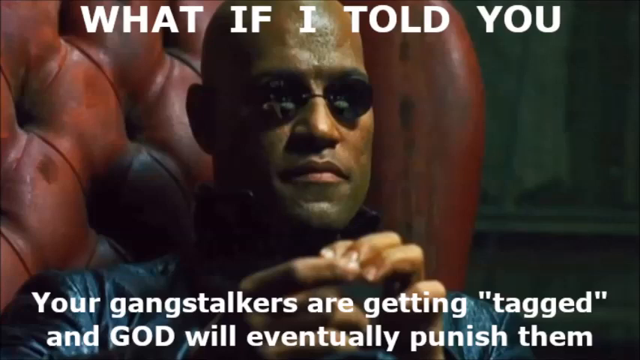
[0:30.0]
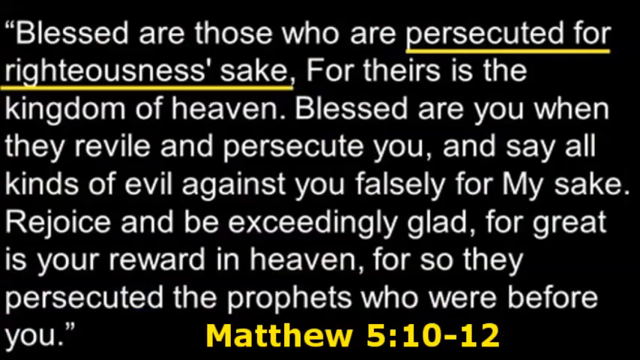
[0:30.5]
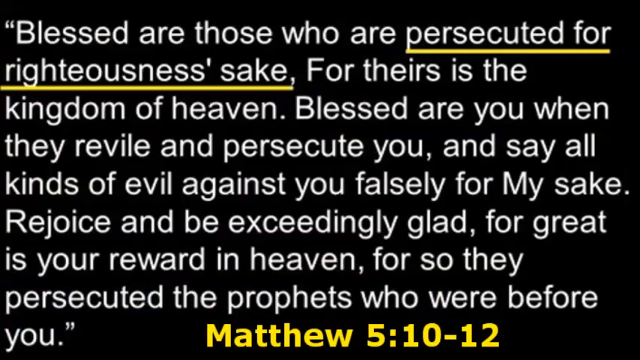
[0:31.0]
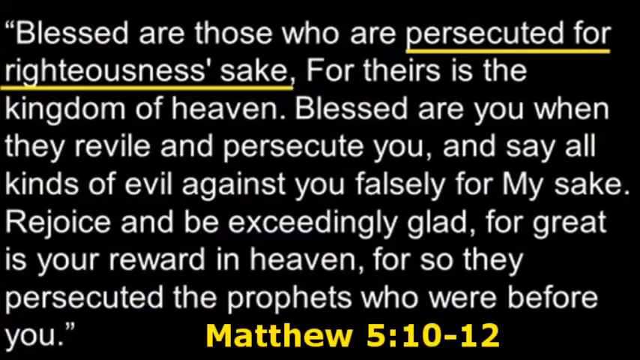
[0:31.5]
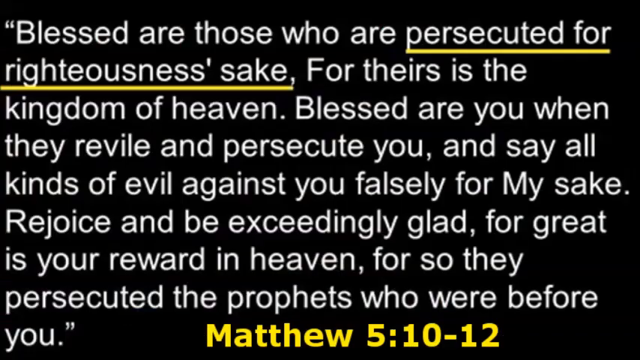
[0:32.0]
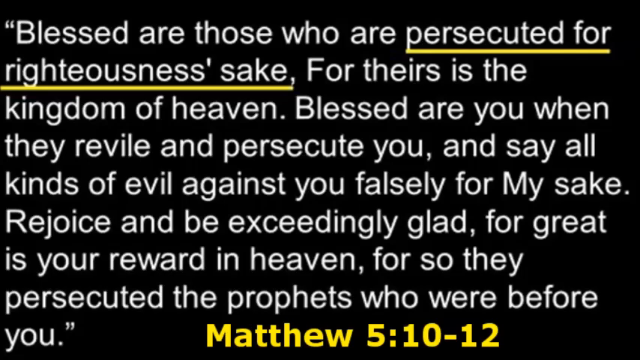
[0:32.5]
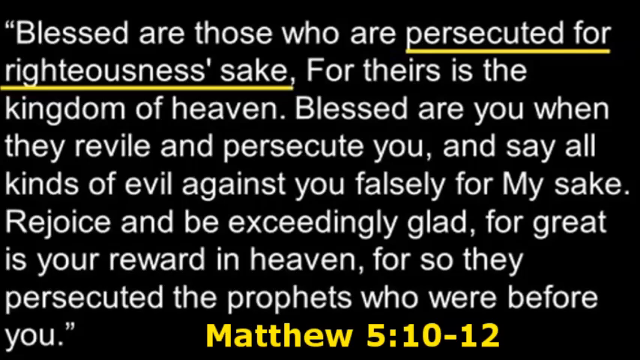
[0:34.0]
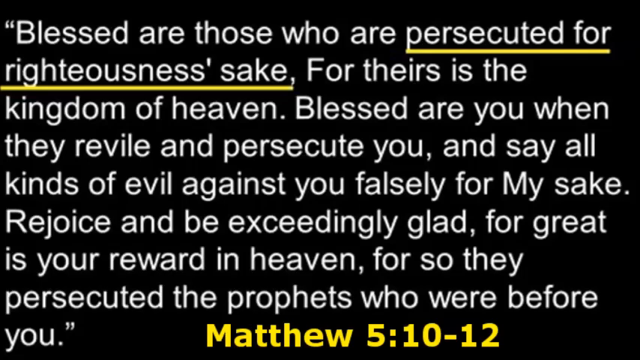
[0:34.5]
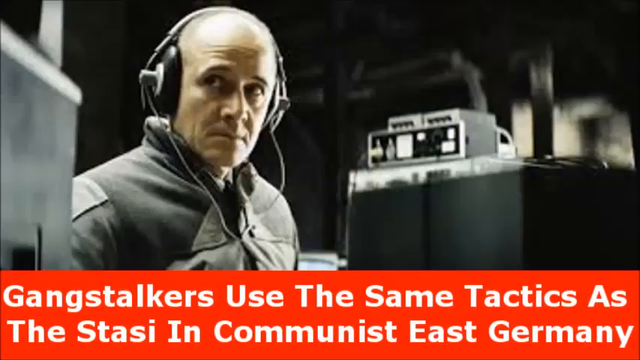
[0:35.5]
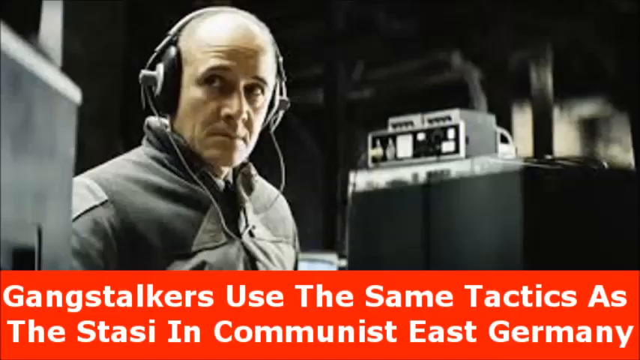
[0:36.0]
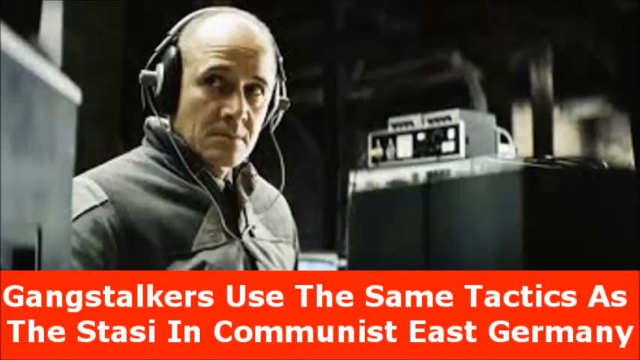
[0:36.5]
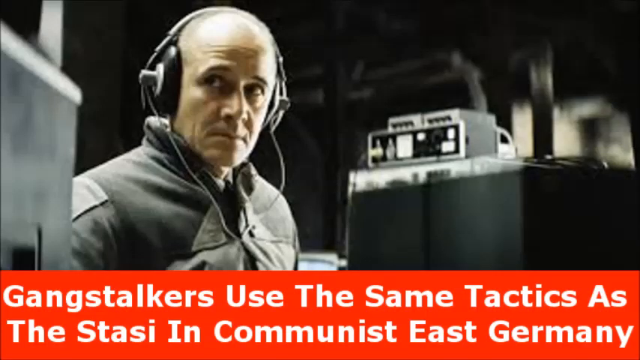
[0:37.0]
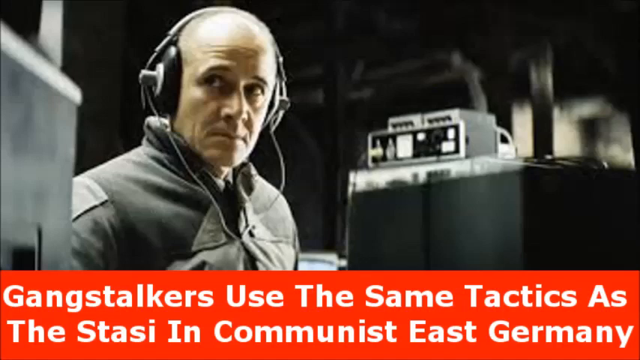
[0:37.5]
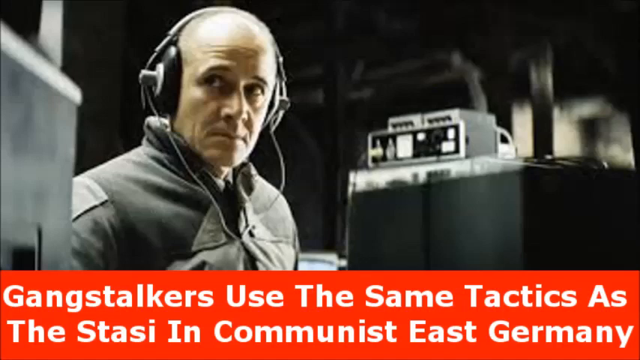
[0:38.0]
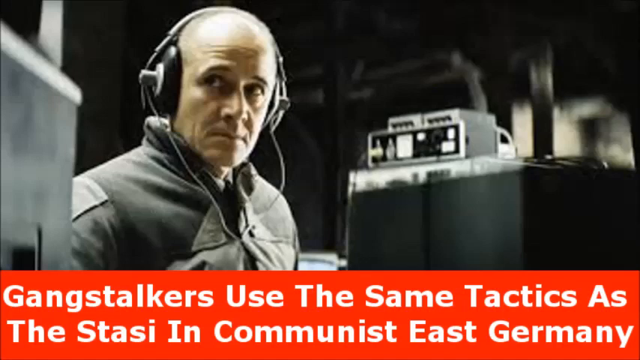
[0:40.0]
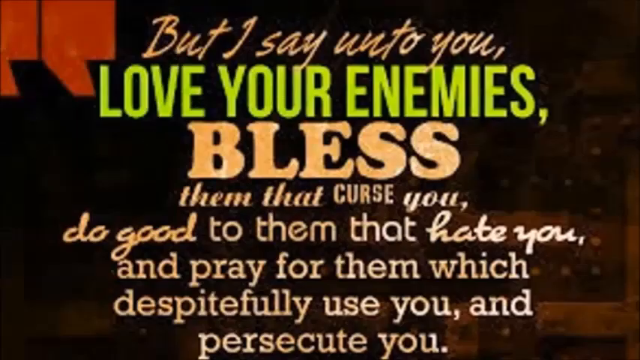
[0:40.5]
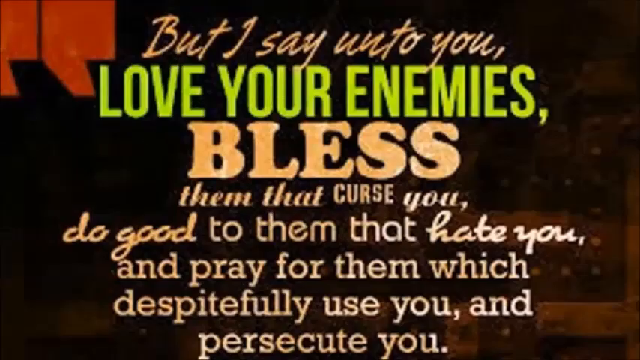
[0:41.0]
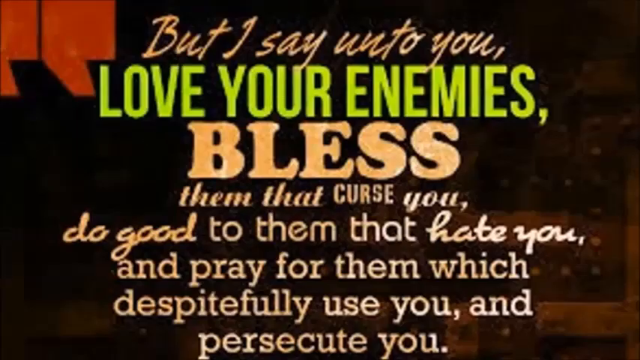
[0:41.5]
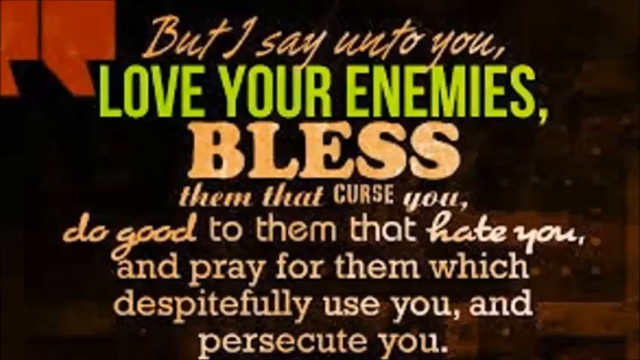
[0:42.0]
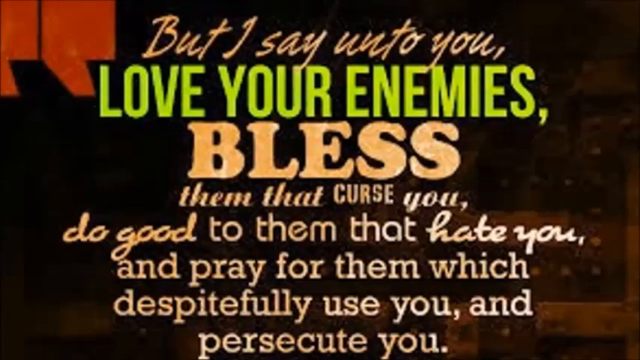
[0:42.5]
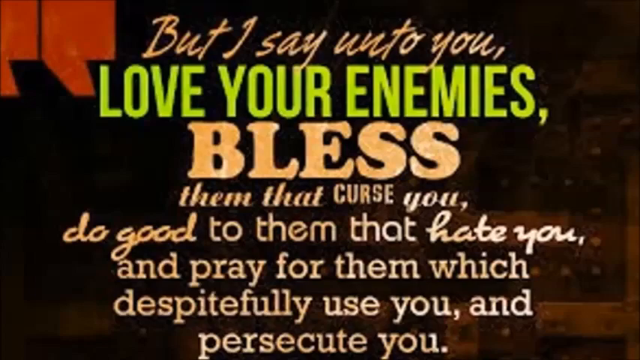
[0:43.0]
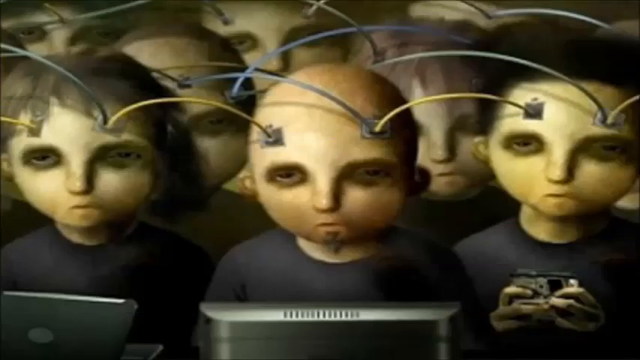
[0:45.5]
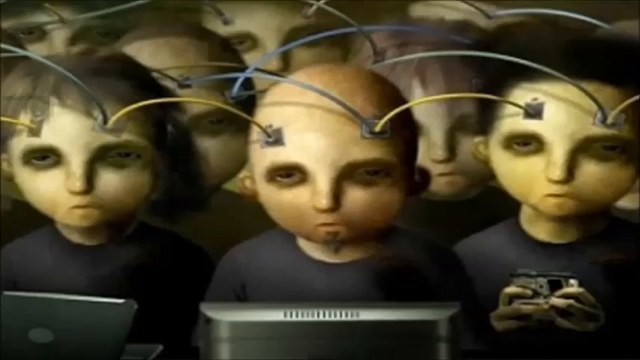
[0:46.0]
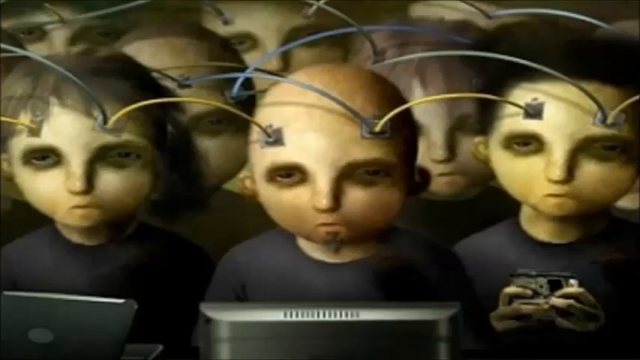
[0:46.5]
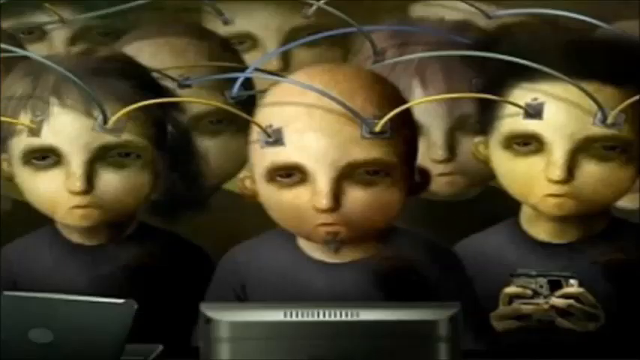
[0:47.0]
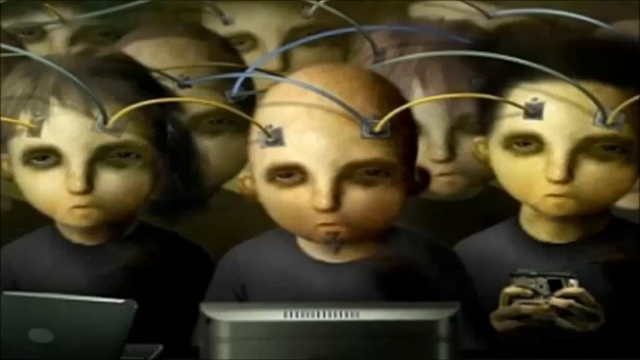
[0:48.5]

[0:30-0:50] An image with a black background shows sentences written in white and yellow; one of these sentences, at the top of the screen, has a yellow underline. The next image shows a man wearing very large headphones on the left side of the screen, with a rectangular red banner containing white text at the bottom. Then a screen with a dark brown background appears, carrying several lines of text in different fonts, colors and sizes. Another image follows that fills the entire screen: stylized people wearing dark-colored shirts, connected to one another by yellow and blue cables. In its lower part the upper portions of monitors, computers or televisions are visible.